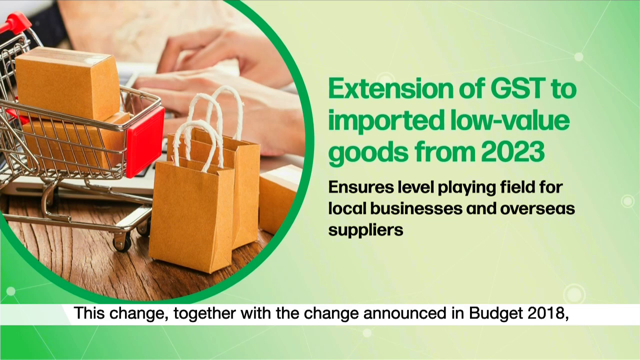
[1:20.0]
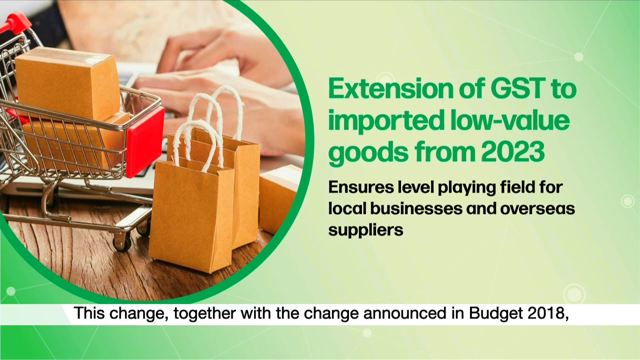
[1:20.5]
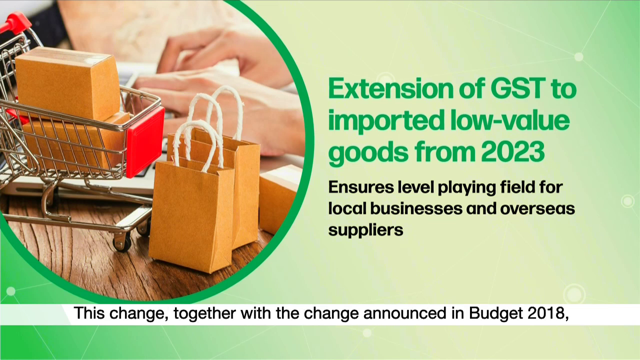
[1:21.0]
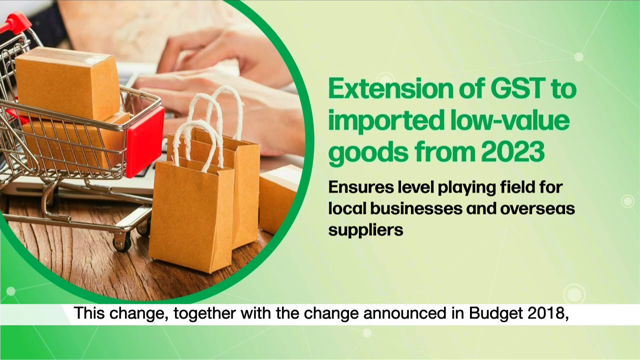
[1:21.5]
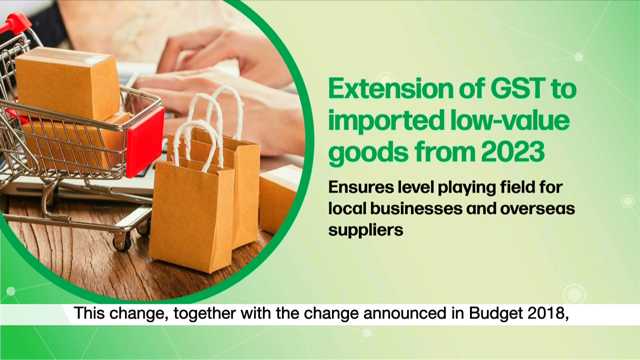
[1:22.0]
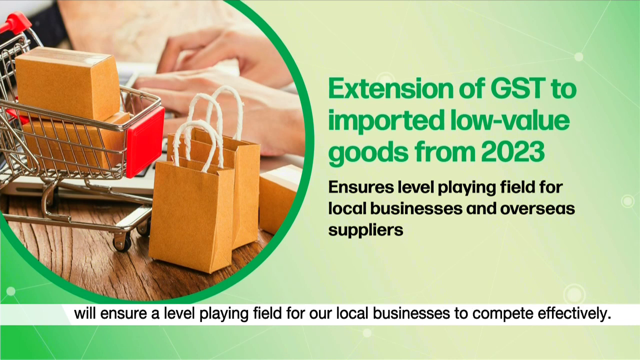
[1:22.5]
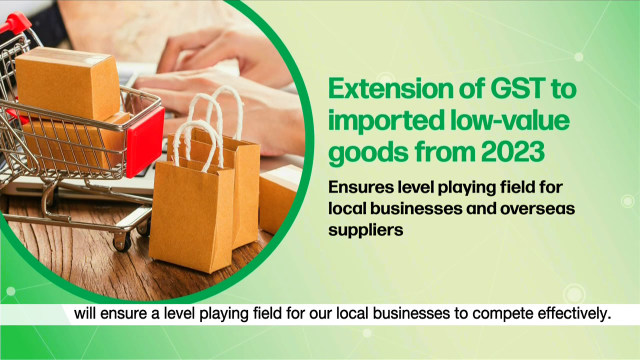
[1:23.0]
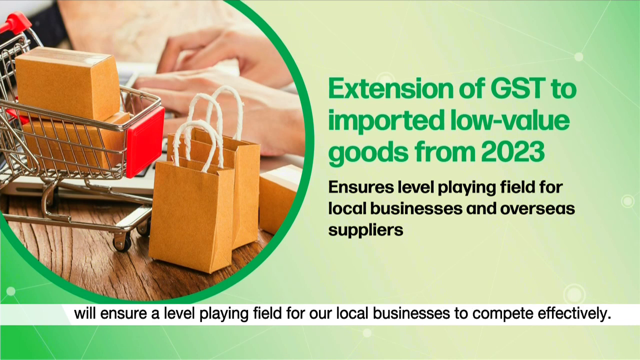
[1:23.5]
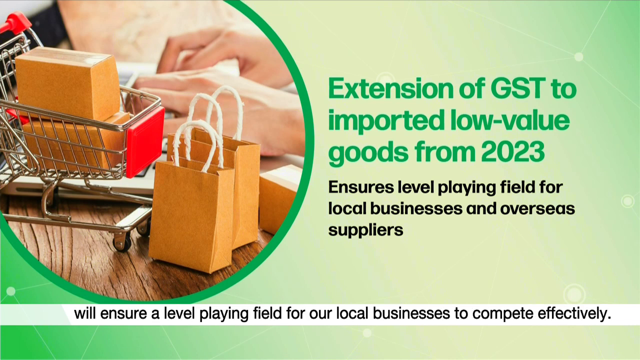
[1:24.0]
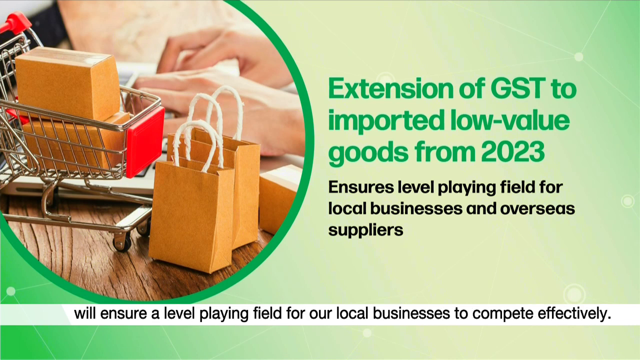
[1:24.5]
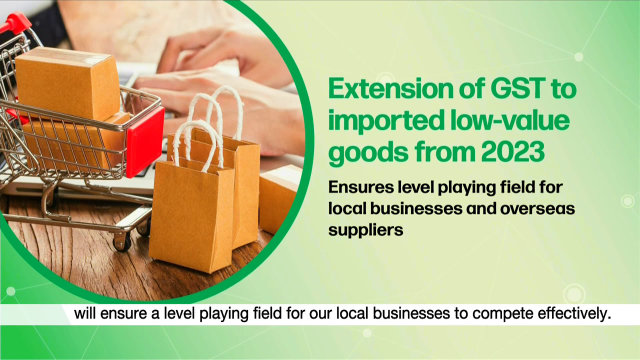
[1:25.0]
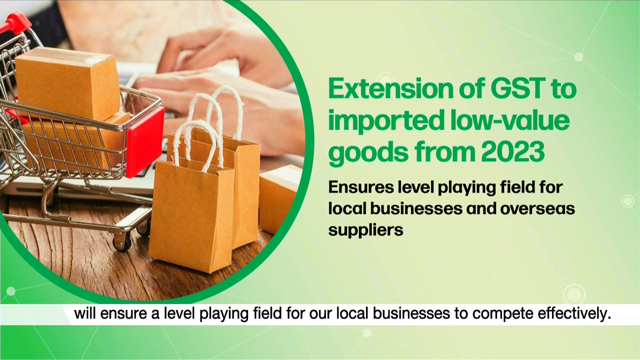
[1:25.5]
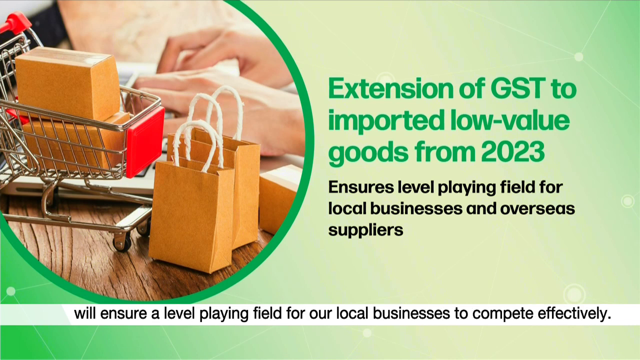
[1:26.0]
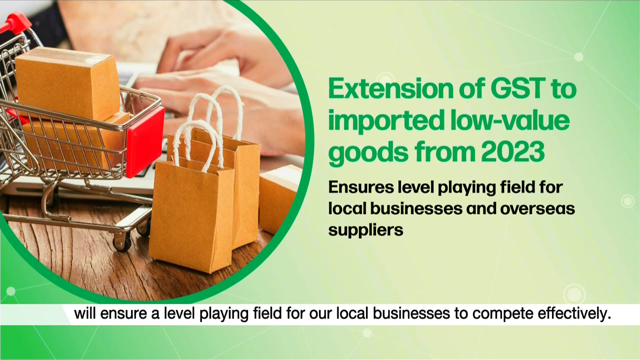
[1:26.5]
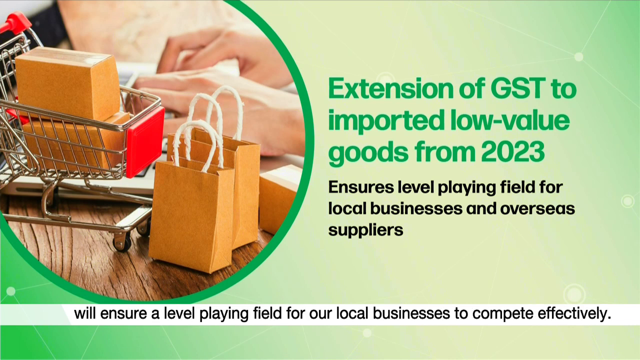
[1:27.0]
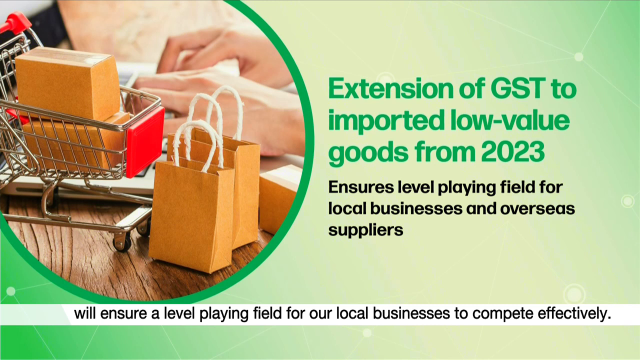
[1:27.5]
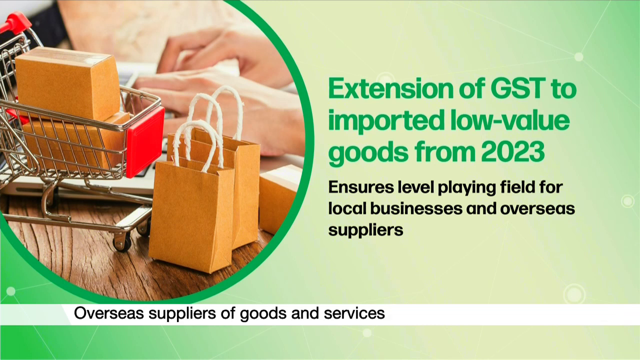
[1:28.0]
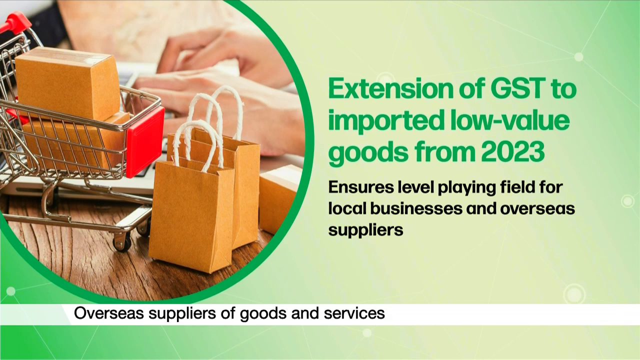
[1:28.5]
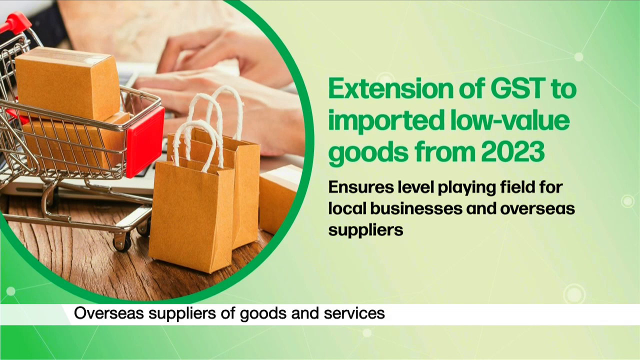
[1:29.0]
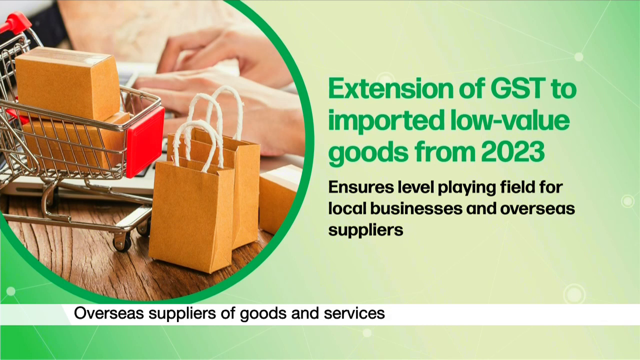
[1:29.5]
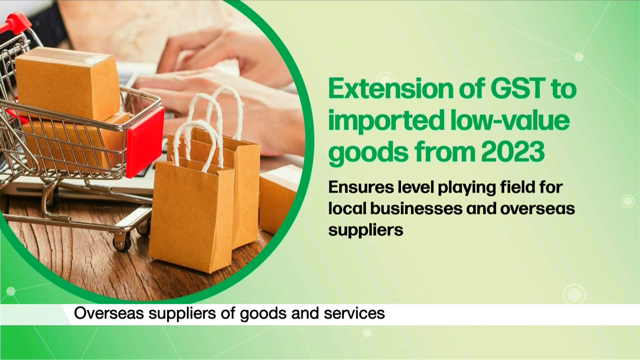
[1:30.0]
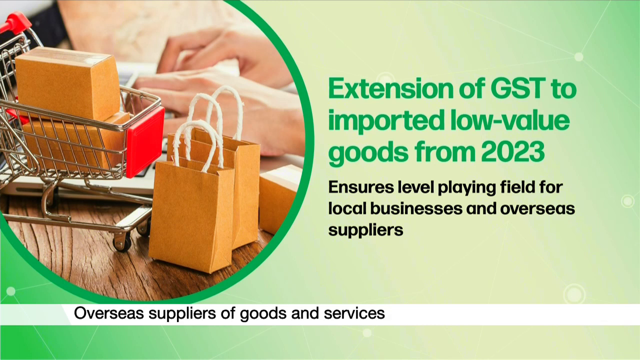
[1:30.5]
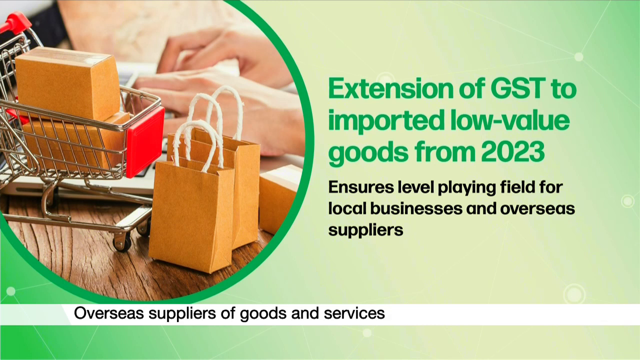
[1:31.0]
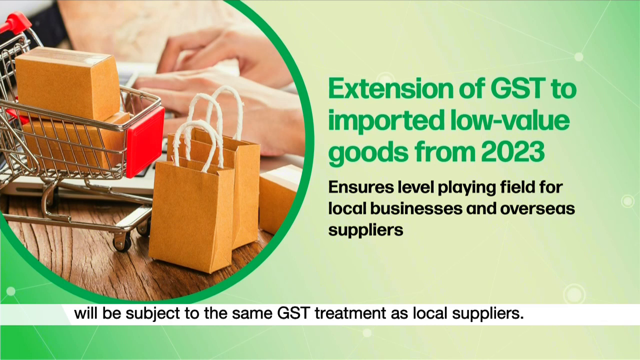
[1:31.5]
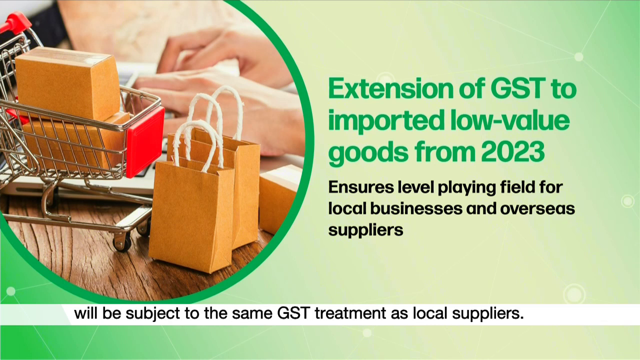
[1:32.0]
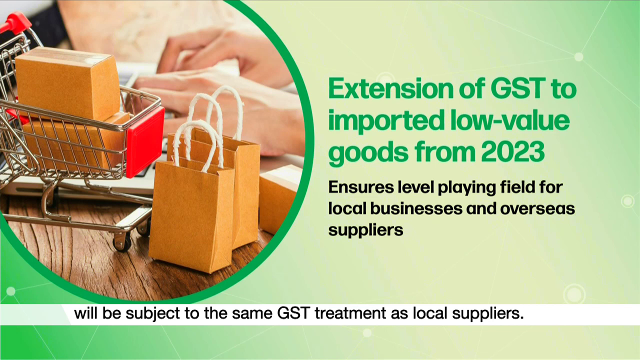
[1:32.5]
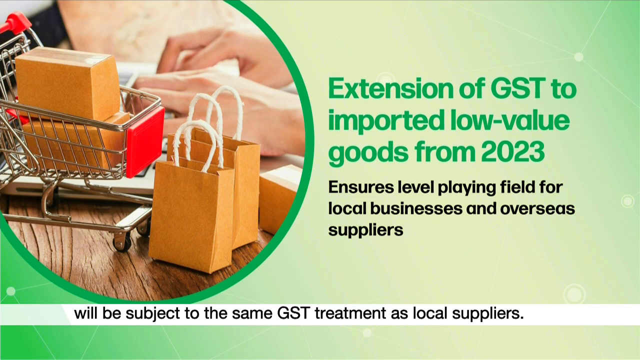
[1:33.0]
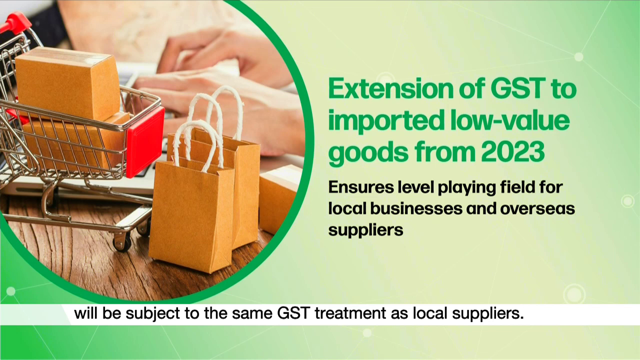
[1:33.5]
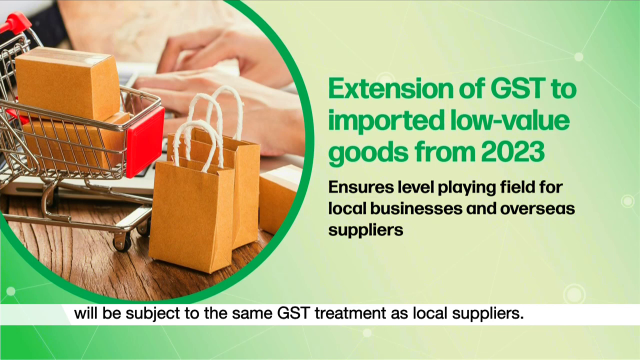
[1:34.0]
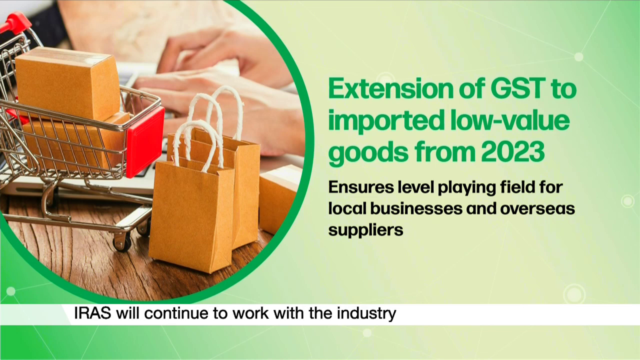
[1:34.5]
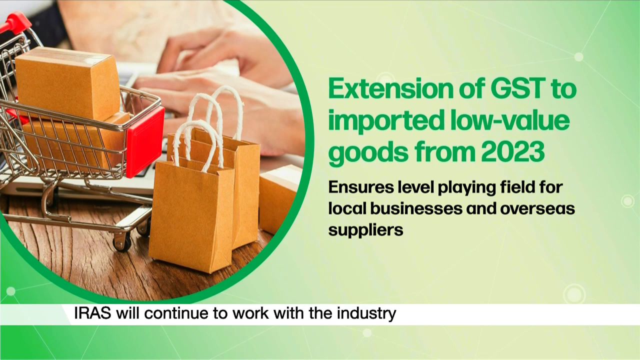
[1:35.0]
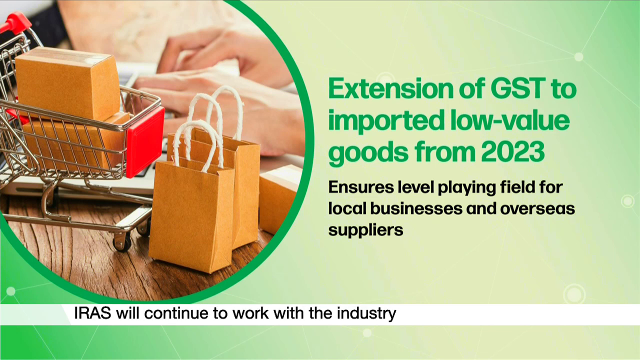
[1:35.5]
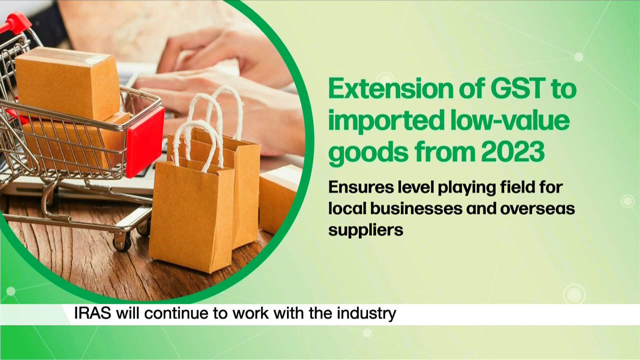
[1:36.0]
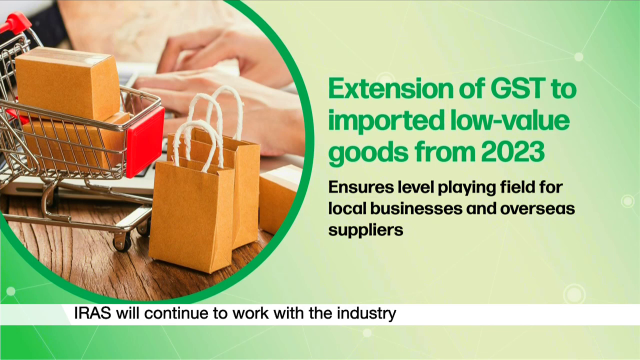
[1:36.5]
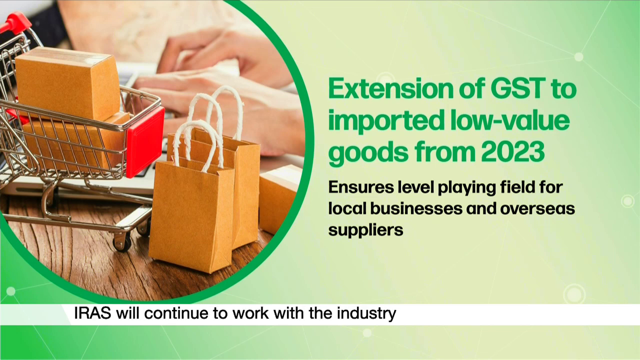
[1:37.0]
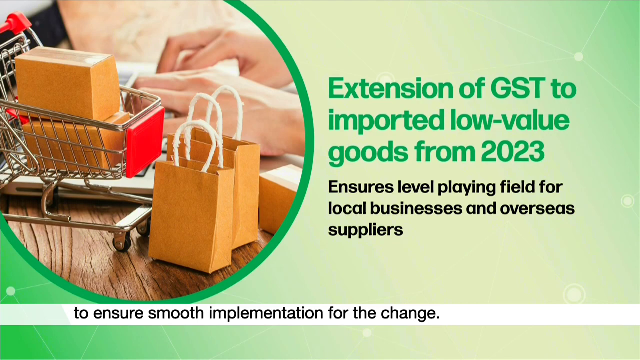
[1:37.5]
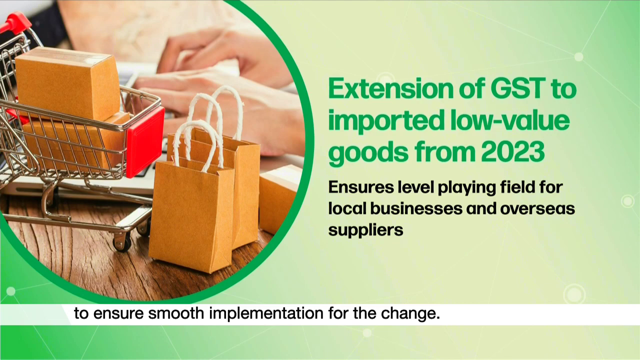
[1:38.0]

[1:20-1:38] The graphic stays on screen, unchanged, the whole time while the man is still speaking, with his words shown at the bottom. He says, "will ensure a level playing field for our local businesses to compete effectively," and goes on: "Overseas suppliers of goods and services will be subject to the same GST treatment as local suppliers. IRAS will continue to work to ensure smooth implementation for the change. This change, together with the change announced on budget 2018, will ensure a level playing field for our local businesses to compete effectively."